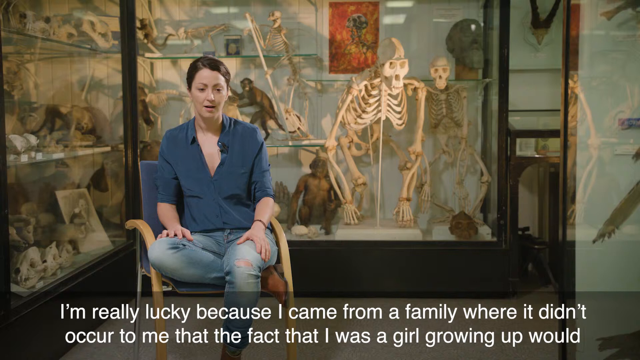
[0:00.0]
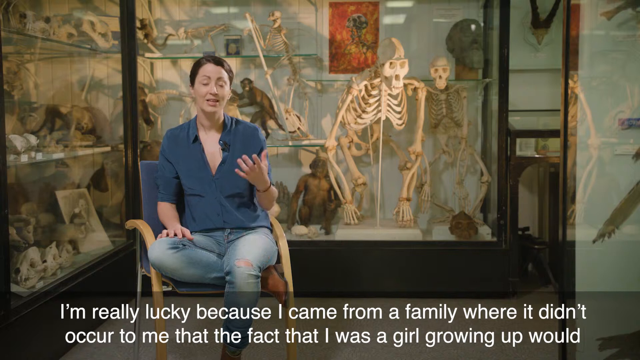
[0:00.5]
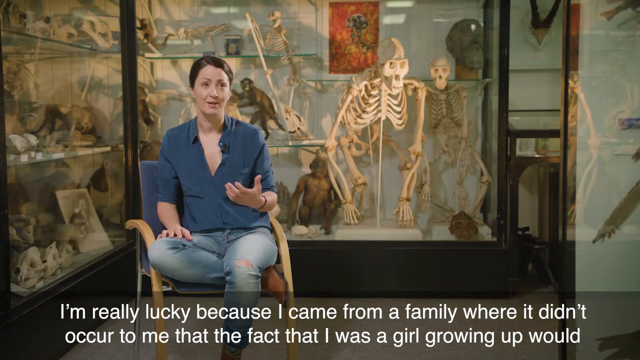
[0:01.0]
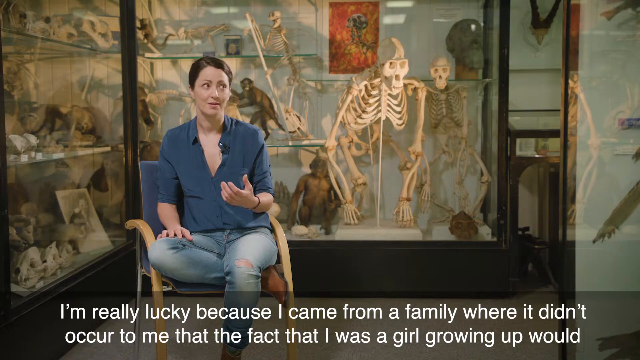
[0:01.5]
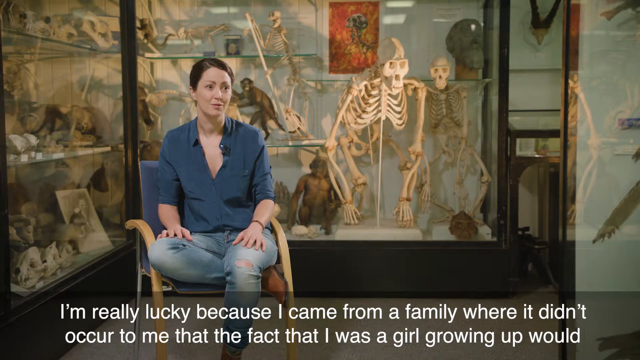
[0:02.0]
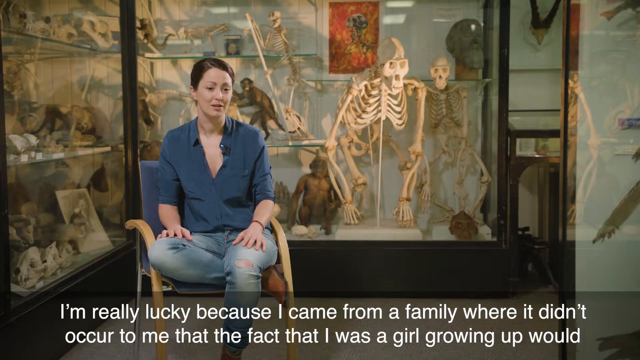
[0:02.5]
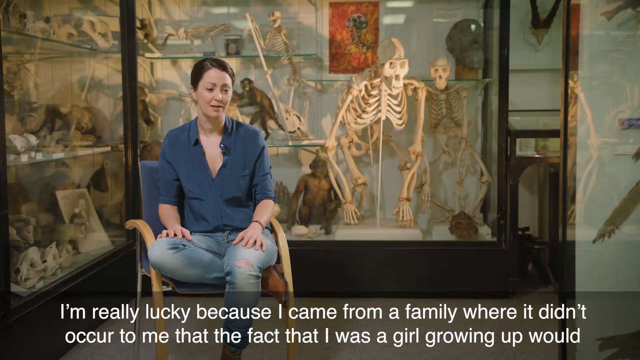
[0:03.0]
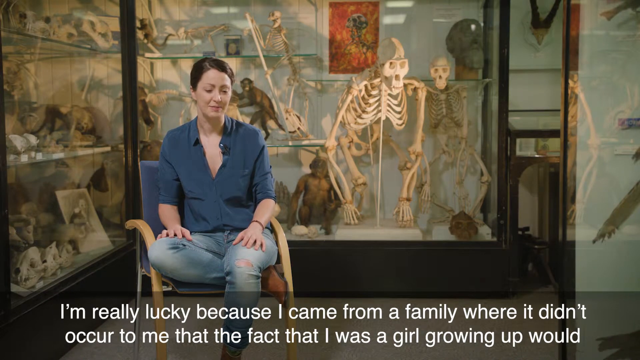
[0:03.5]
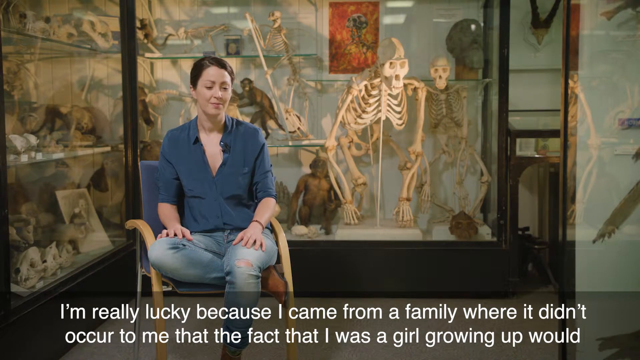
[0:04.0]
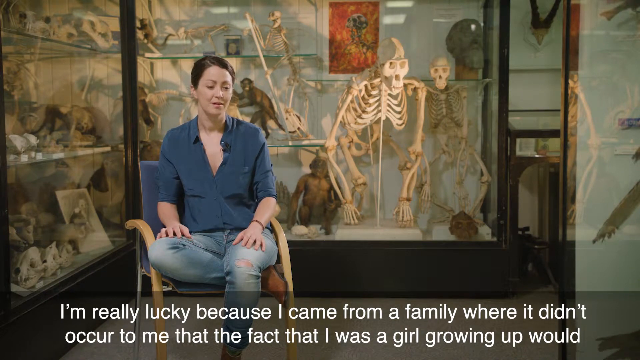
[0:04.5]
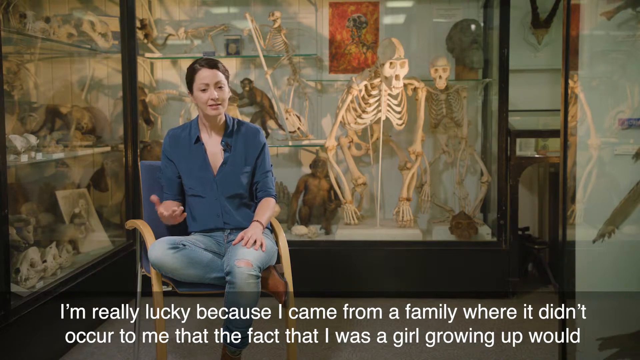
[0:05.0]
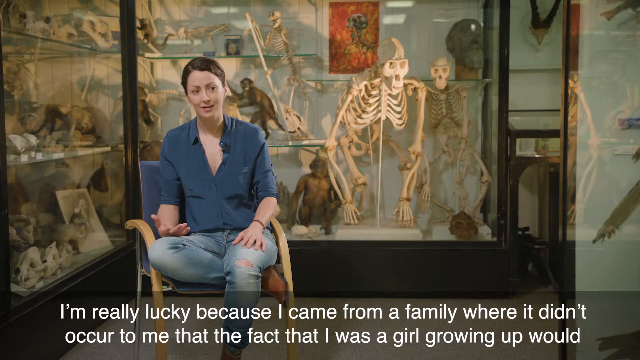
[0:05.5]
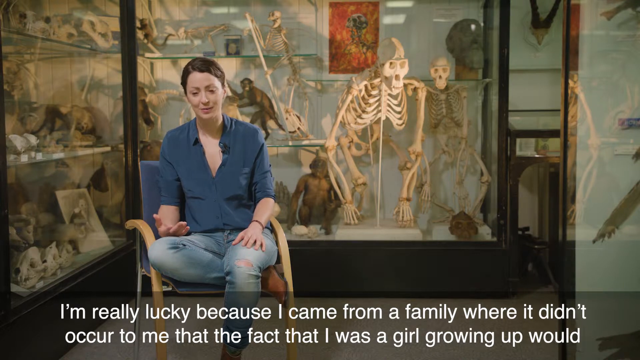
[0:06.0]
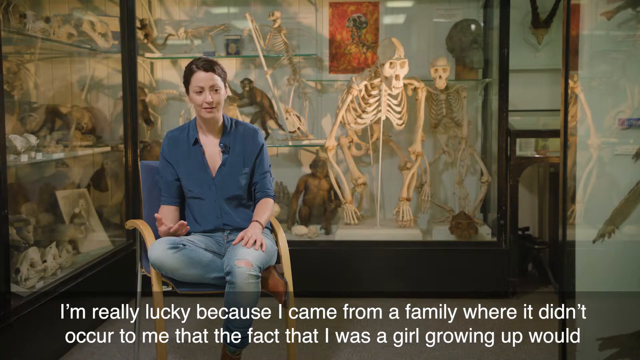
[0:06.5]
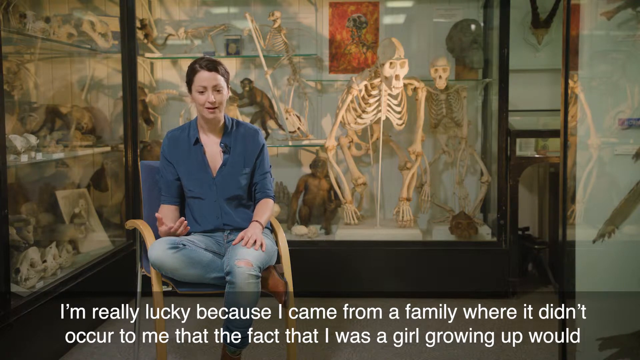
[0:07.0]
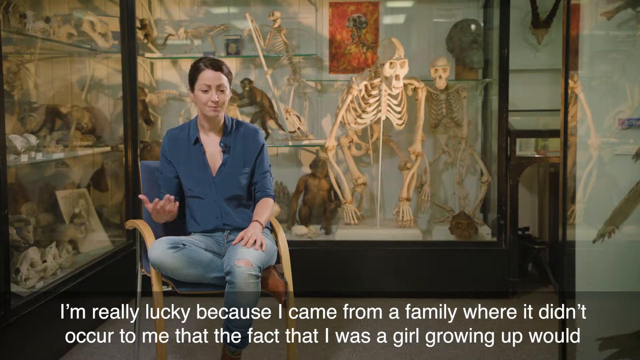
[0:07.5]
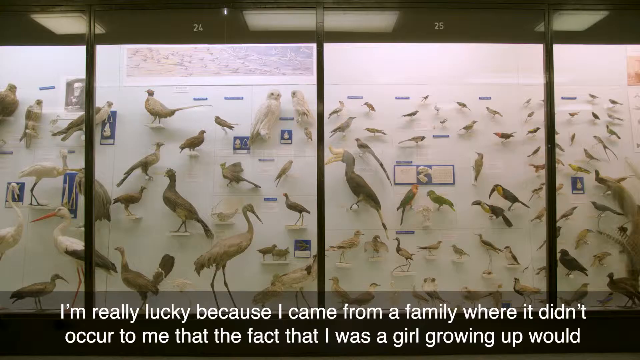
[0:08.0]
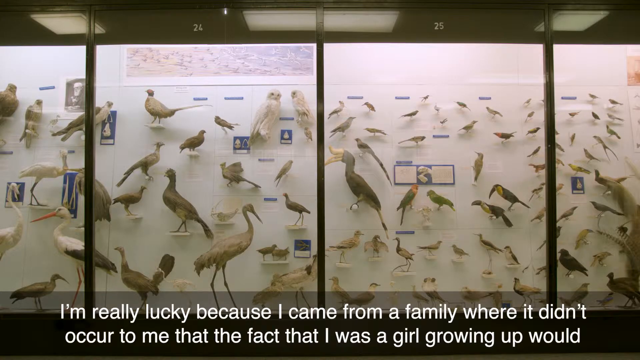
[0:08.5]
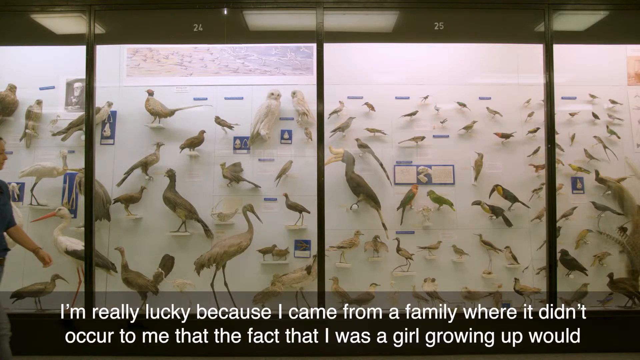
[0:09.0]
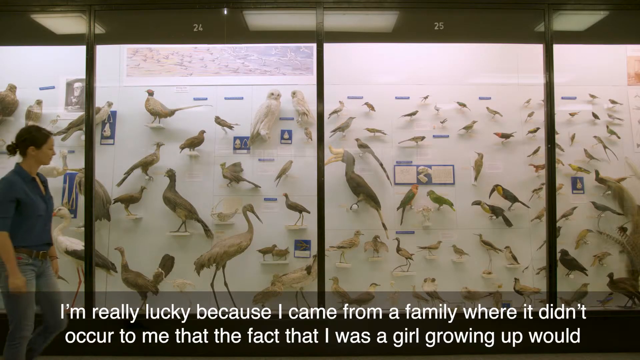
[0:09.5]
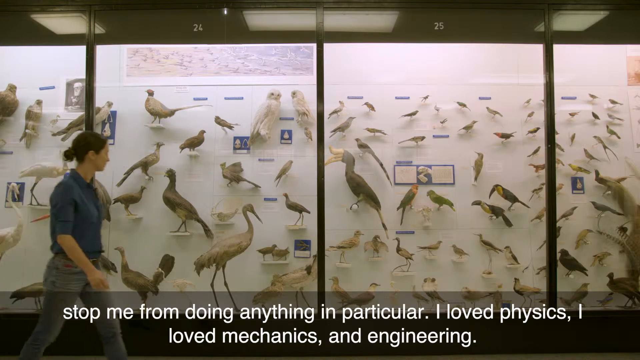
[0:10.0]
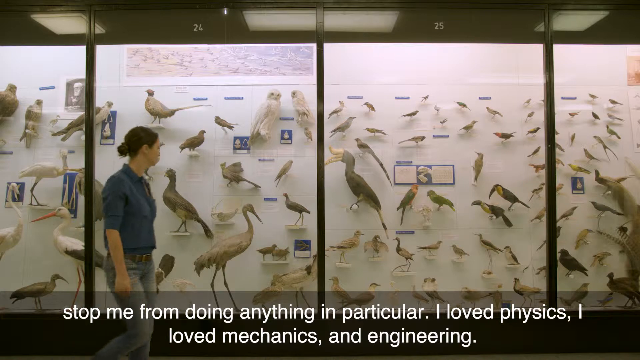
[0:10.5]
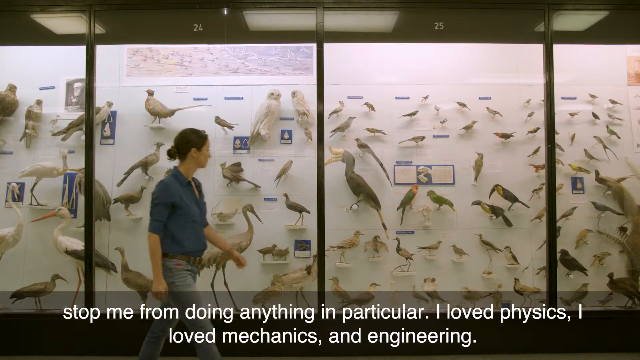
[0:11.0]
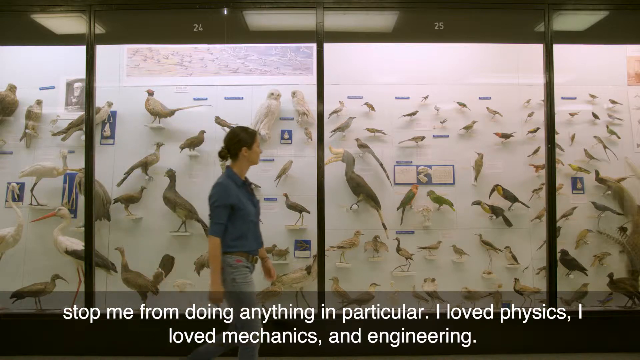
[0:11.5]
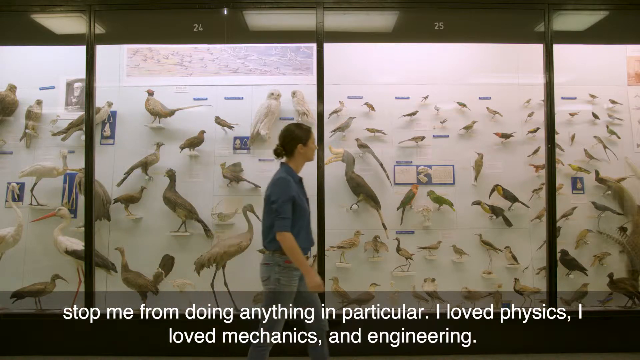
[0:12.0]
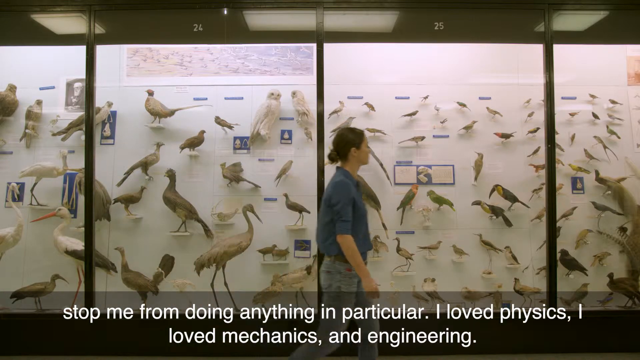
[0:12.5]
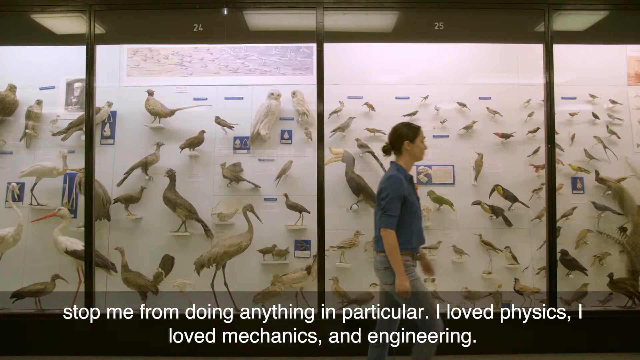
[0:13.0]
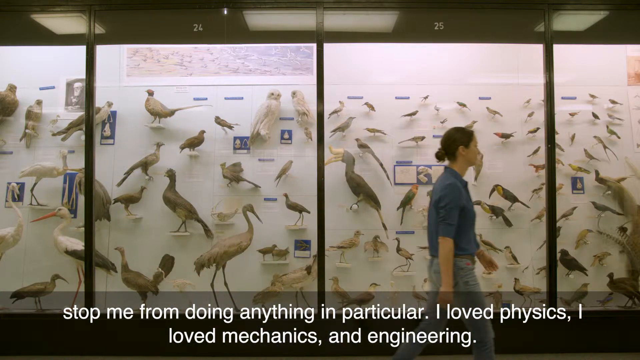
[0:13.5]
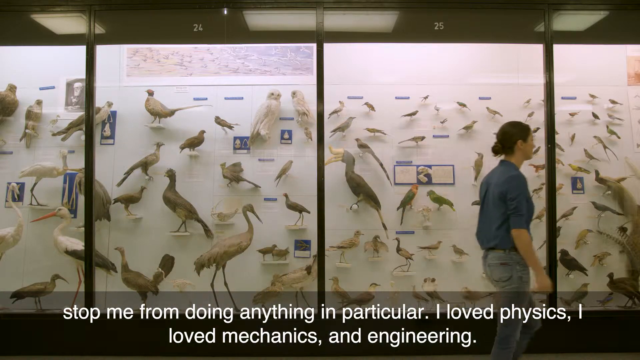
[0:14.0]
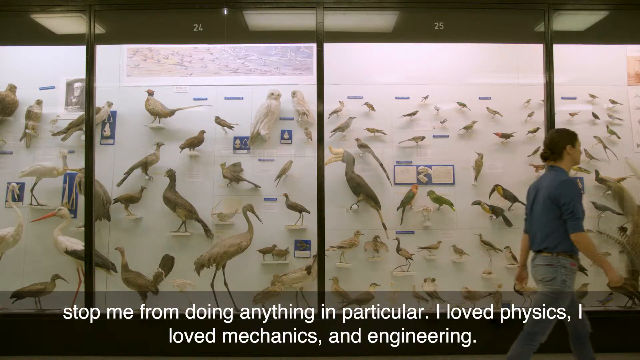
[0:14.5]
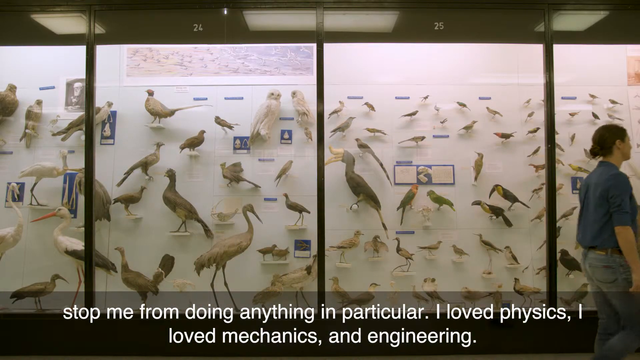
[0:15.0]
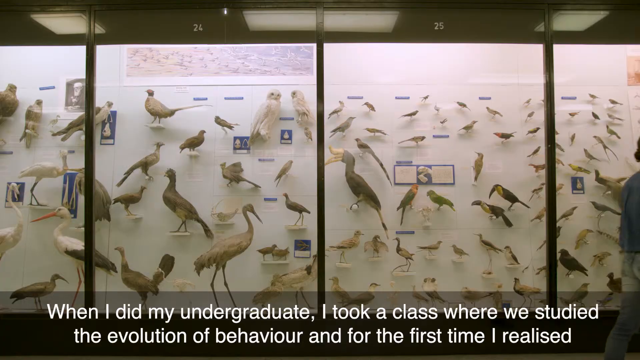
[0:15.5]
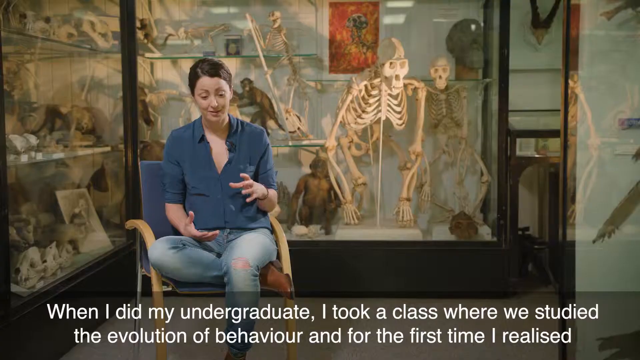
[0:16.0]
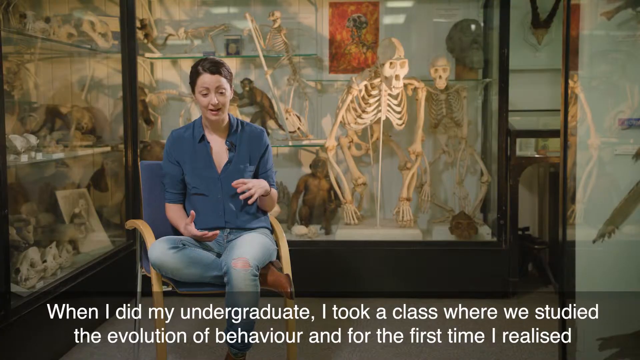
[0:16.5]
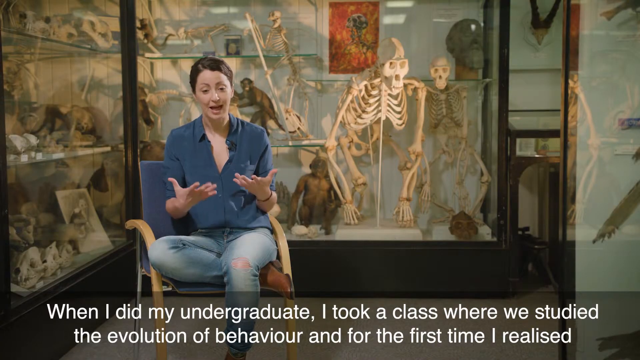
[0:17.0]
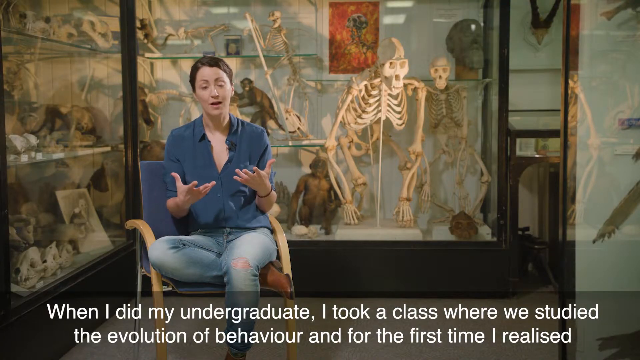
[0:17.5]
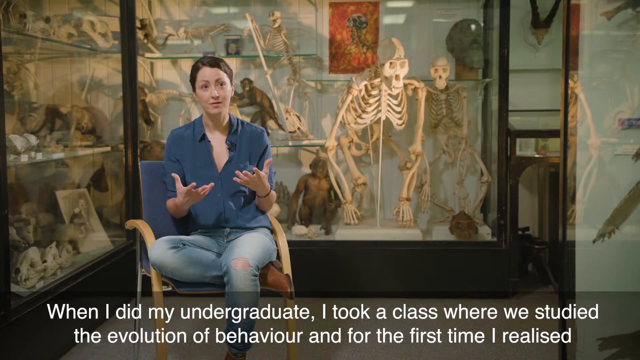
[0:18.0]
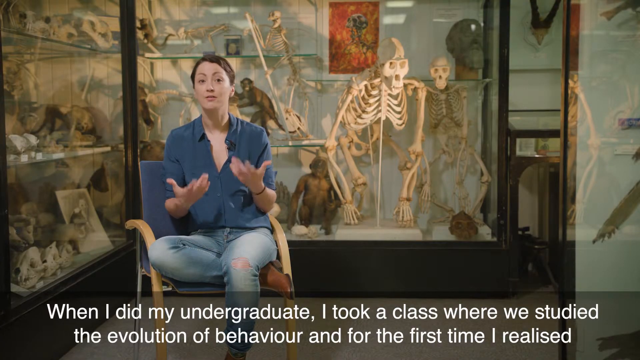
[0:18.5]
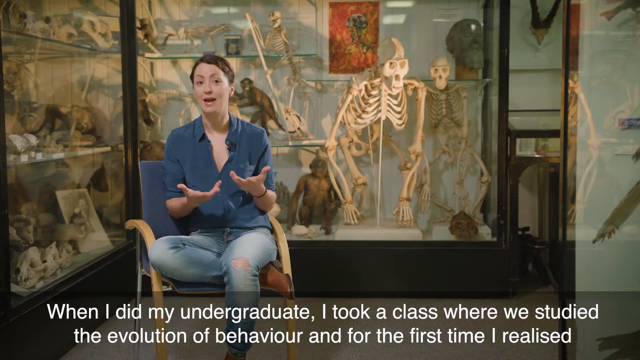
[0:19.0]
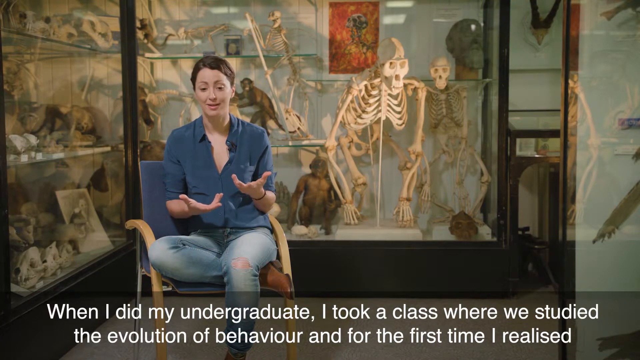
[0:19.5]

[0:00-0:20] A woman sits in a chair wearing a blue shirt, blue jeans and brown shoes. Her right hand is on her right thigh and her left hand is just above her left knee on her left thigh. She looks down, her mouth open as she speaks. Behind her is a display showing the bones and stuffed bodies of different types of apes and animals, primarily monkeys. At the bottom of the frame, a dark gray clear text box contains white text reading "I'm really lucky because I came from a family where it didn't occur to me that the fact that I was a girl growing up would". She raises her left hand, closes her eyes as she brings it down to chest level, returns it to her left thigh, turns her head and smiles. She speaks with a relieved look, takes a breath and raises her right hand off her right thigh, then returns it palm down onto the thigh and looks down with a slight look of relief and a slight smile as she continues to speak. She then motions with her right hand to the left side of the frame. The scene shifts to a display case divided into four sections, holding several different types of birds on perches. The case is illuminated from above and set against a white wall. The woman walks in from the left side, looking at the display case, and moves slowly toward the right. The white text at the bottom changes to "stop me from doing anything in particular. I loved physics, I love mechanics, and engineering." She continues walking right in front of the bird display, swinging her arms and looking to her left toward the display. Walking slowly, she eventually disappears from view, and the text at the bottom changes.